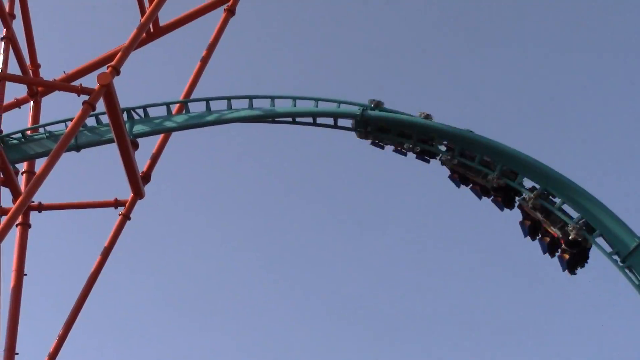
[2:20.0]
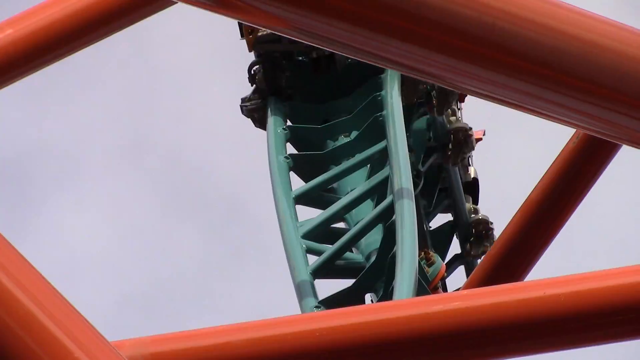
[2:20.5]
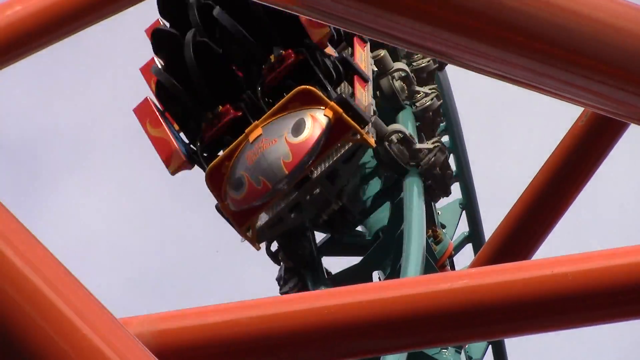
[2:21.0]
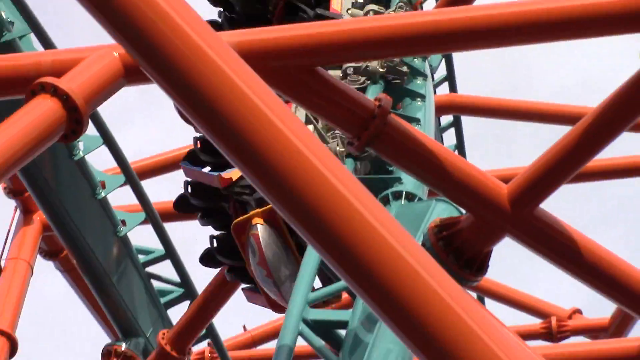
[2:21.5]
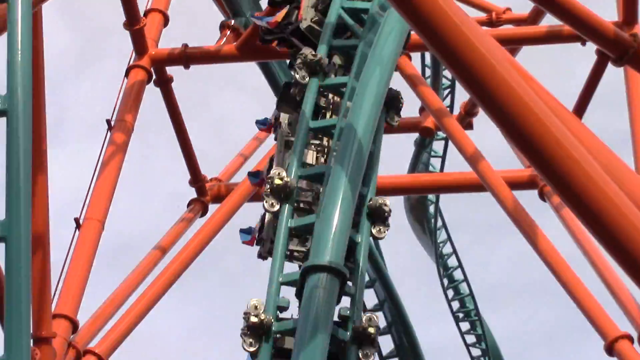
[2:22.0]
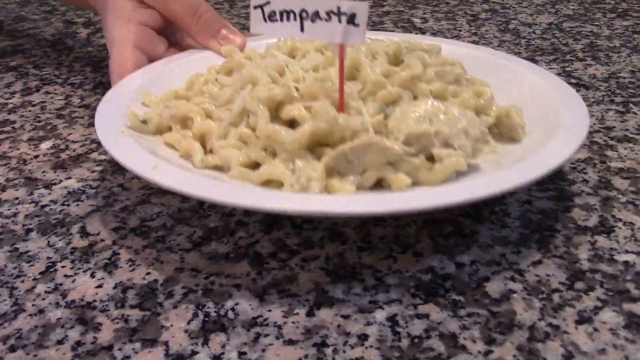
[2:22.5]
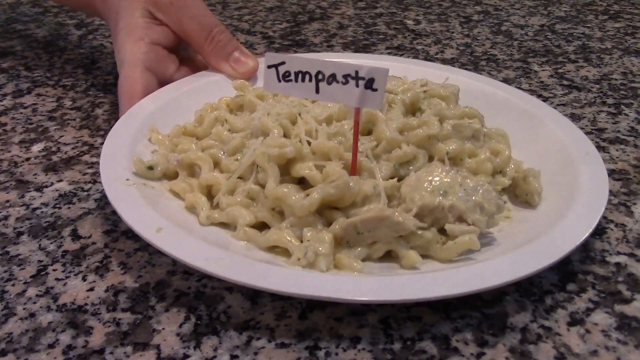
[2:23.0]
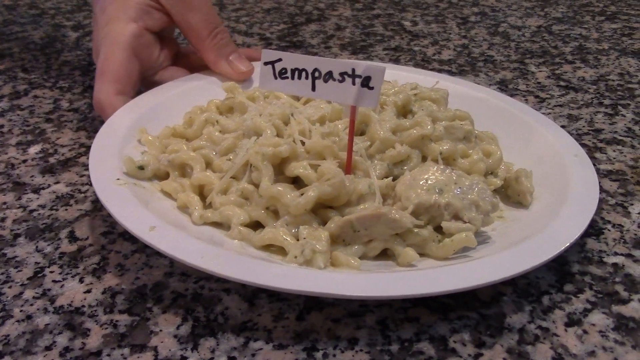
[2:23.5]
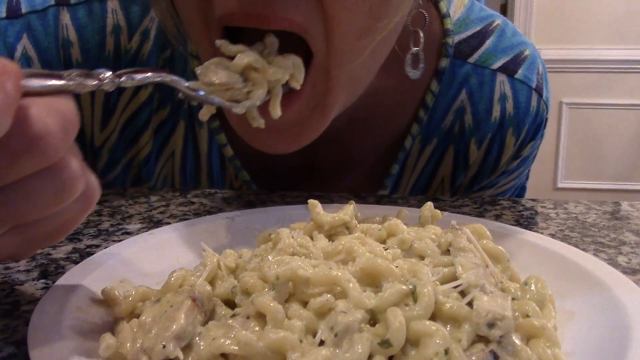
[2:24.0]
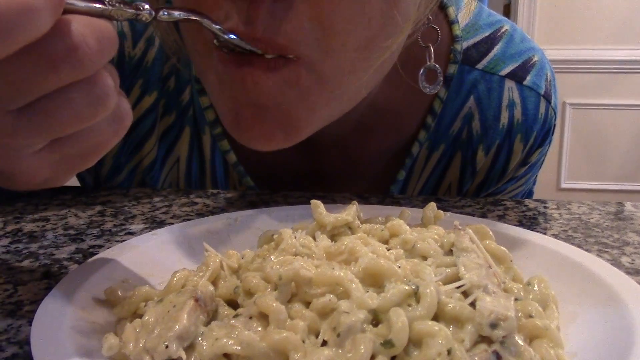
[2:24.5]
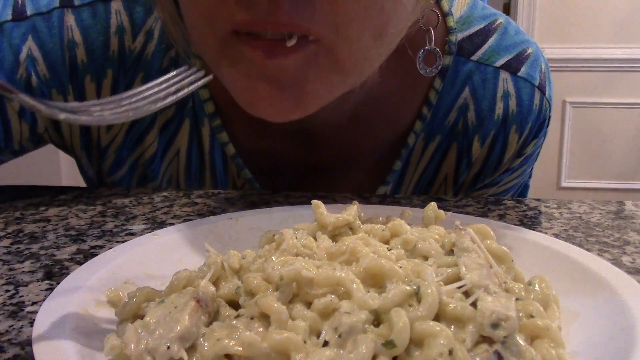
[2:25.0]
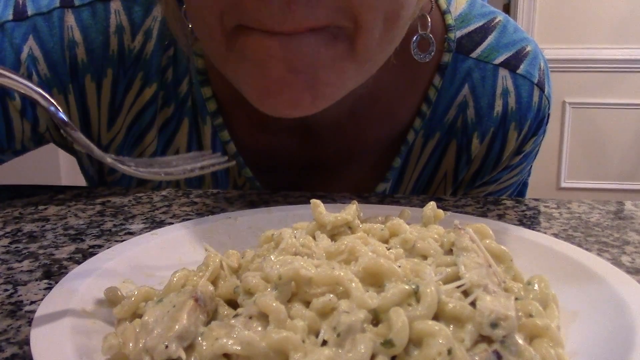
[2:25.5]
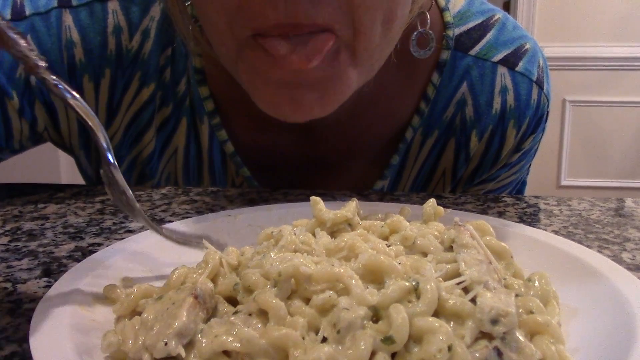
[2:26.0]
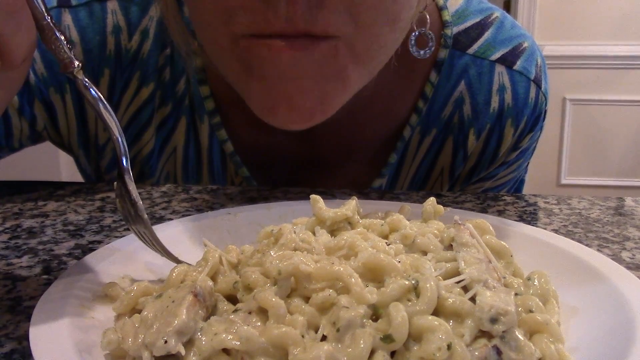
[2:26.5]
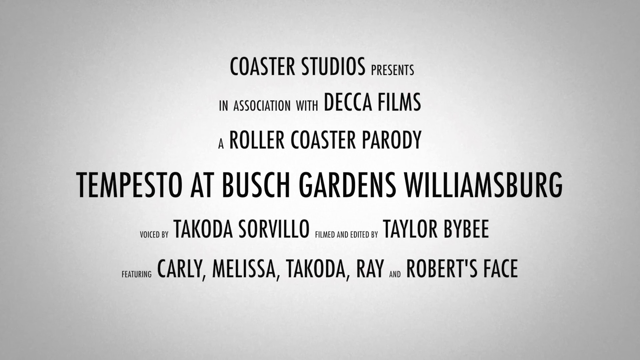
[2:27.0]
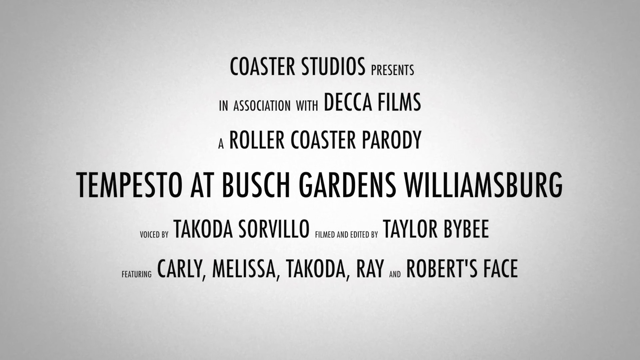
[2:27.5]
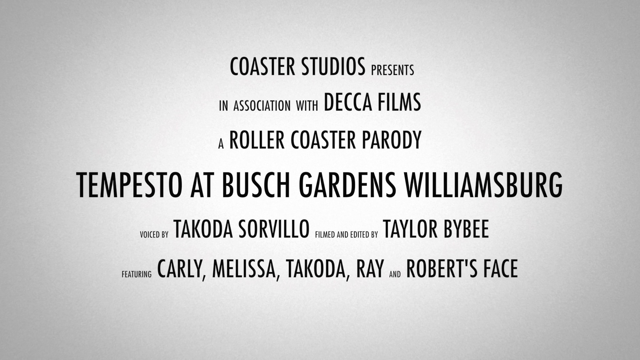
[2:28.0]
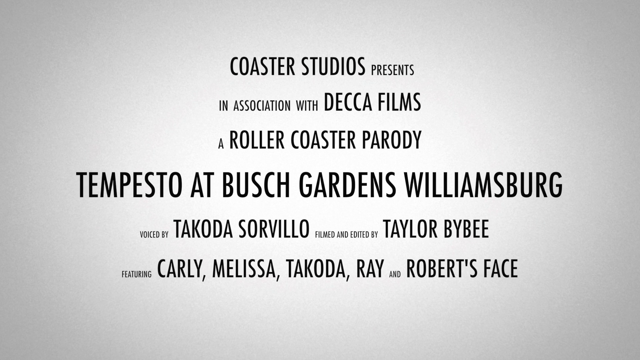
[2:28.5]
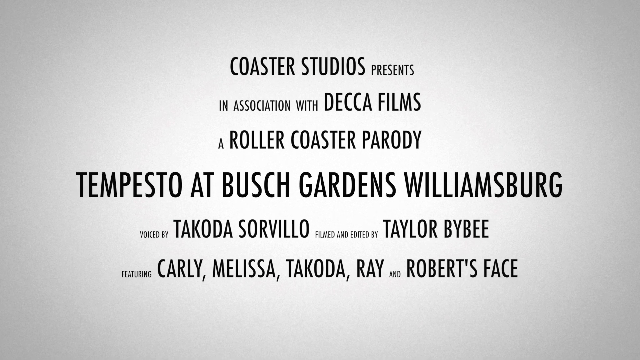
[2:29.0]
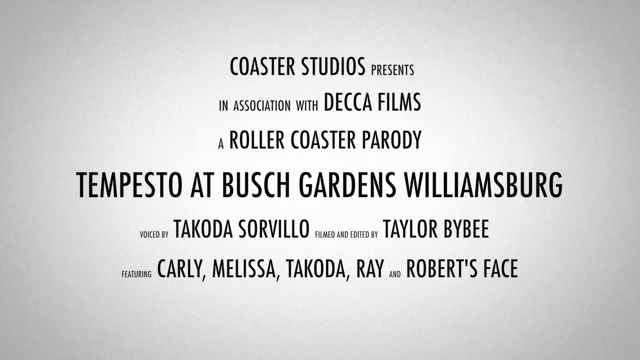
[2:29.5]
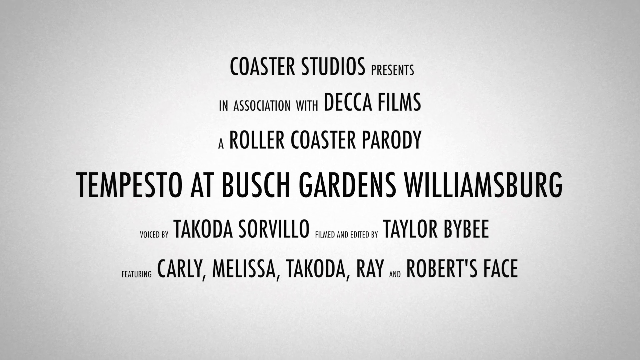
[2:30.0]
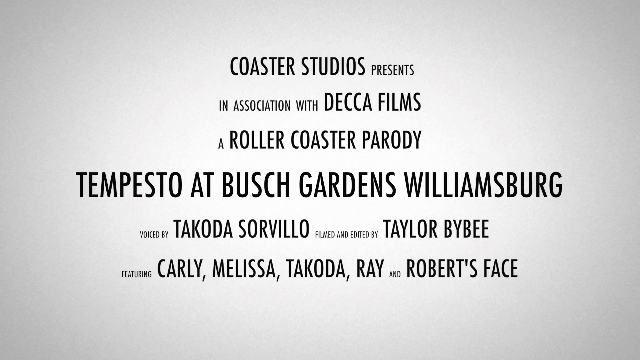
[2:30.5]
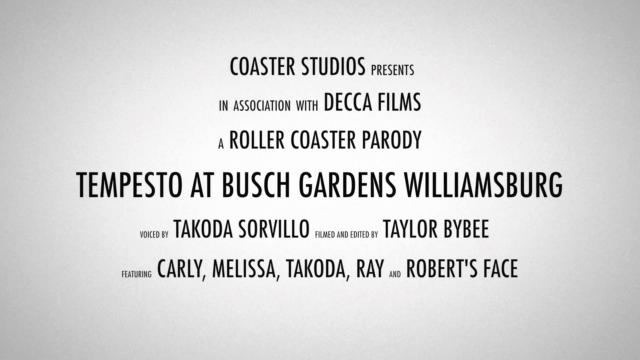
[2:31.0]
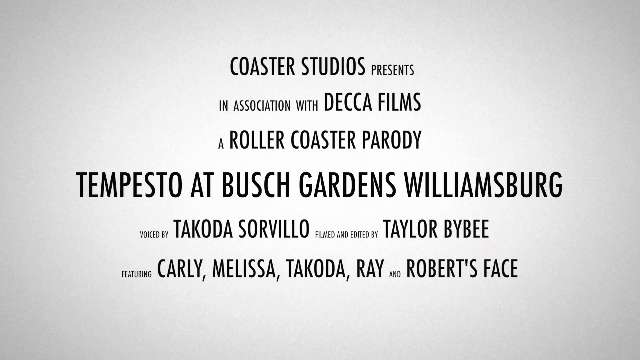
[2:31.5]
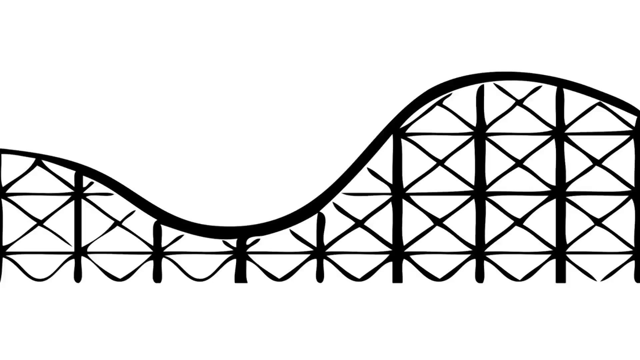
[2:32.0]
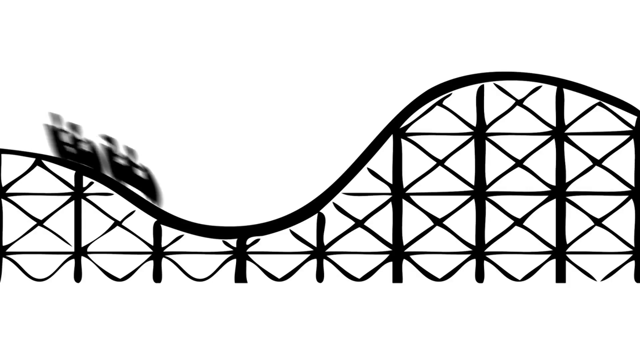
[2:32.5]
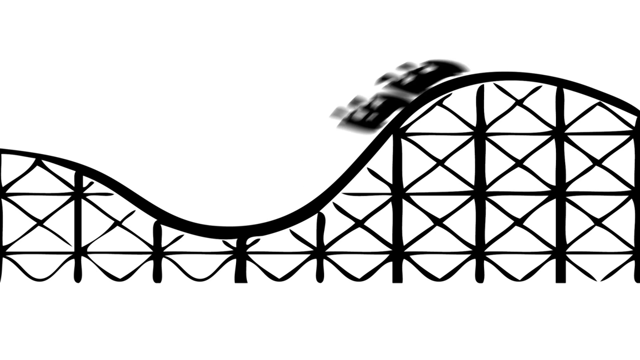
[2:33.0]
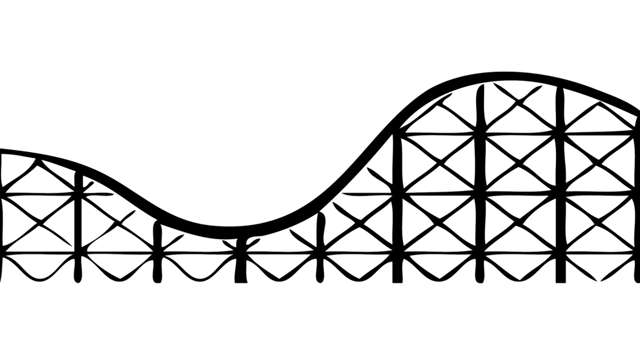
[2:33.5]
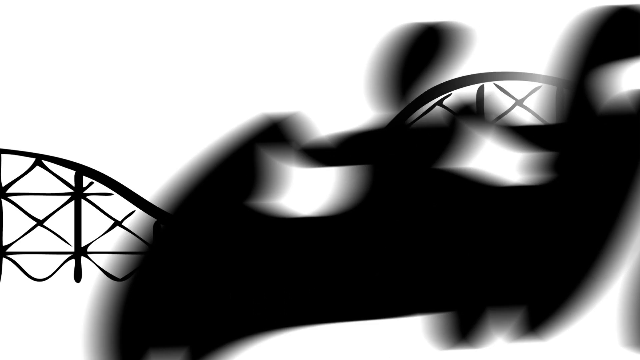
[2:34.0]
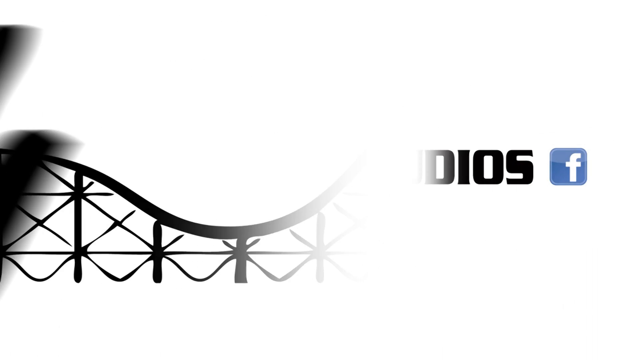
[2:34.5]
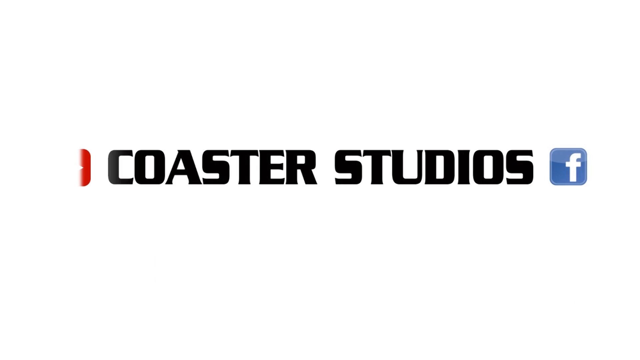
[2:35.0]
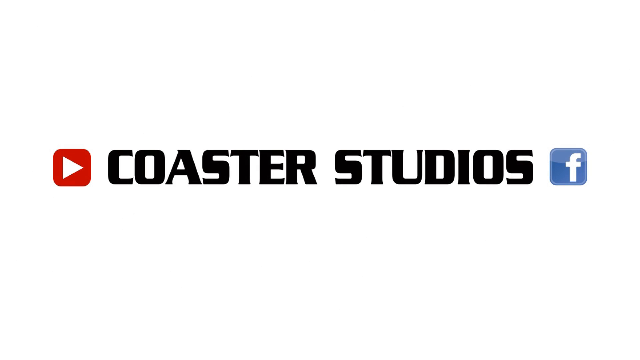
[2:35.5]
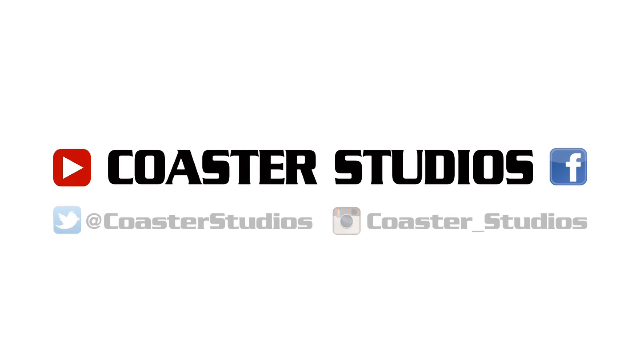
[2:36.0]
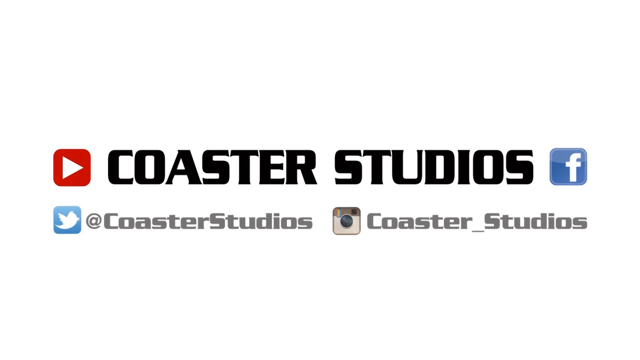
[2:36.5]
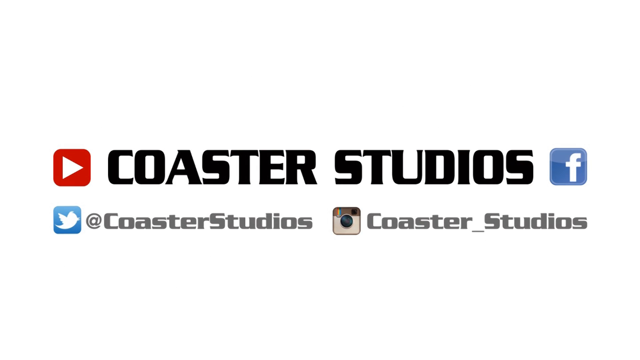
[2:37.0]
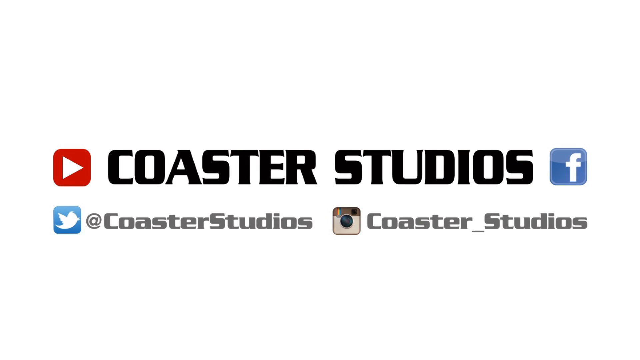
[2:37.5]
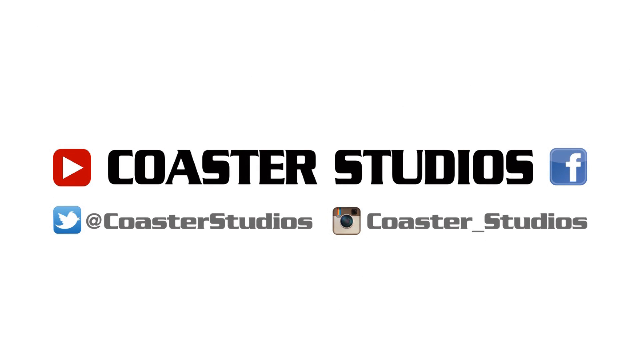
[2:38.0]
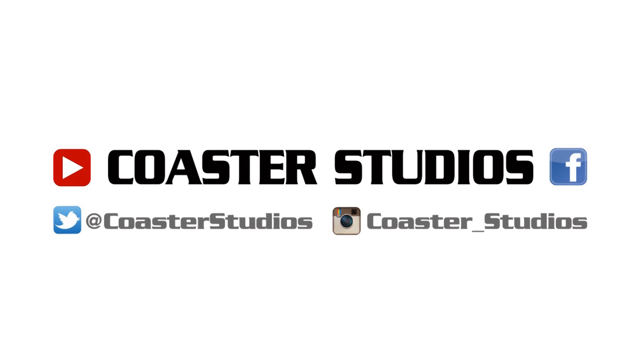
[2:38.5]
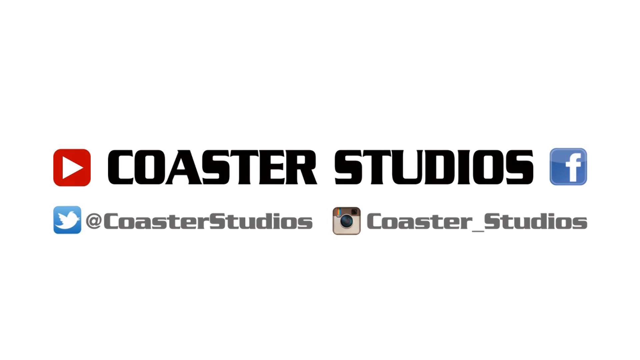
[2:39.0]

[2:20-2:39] The roller coaster continues through various parts of the ride, going through the twisty turns and descending, on the same light green tracks with orange piping, and it descends one final time down a decline. The scene cuts back to the kitchen, where a plate of pasta on a white dish is placed on the granite countertop, this time with a little flag in the pasta: an orange stick with a white piece of paper reading "temp pasta" in black lettering. A close-up shows the woman in the blue patterned top, visible only from her nose down, sitting at the counter with the plate in front of her, scooping pasta with a fork and eating it. What appear to be credits read "Coaster Studio presents in association with DECA Films, a roller coaster parody, Tempesto at Bush Gardens Williamsburg" in black text over a gradient background that is white in the center and darkens to grays and blacks at the edges. The video finishes with a black illustration of a roller coaster going through ups and downs, and the words "Coaster Studios" appear with a YouTube logo on the left and a Facebook logo on the right.